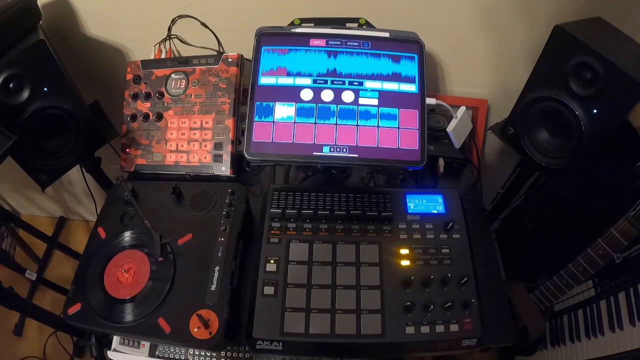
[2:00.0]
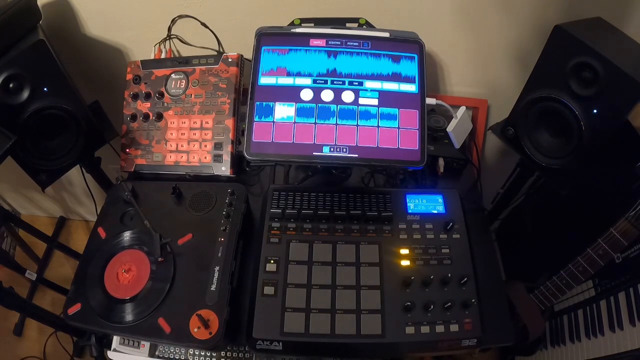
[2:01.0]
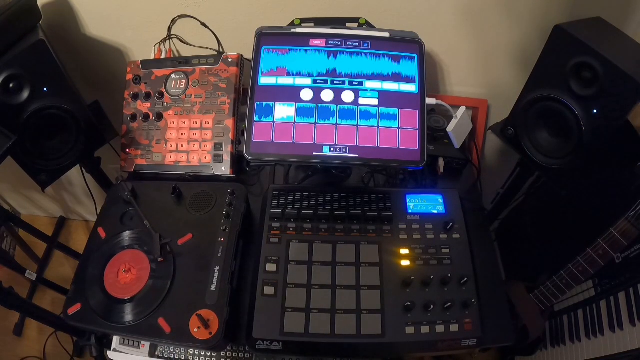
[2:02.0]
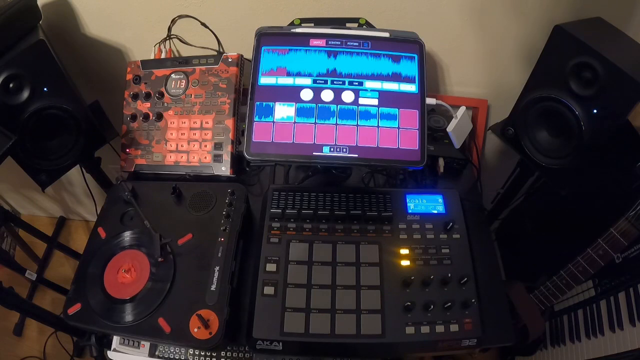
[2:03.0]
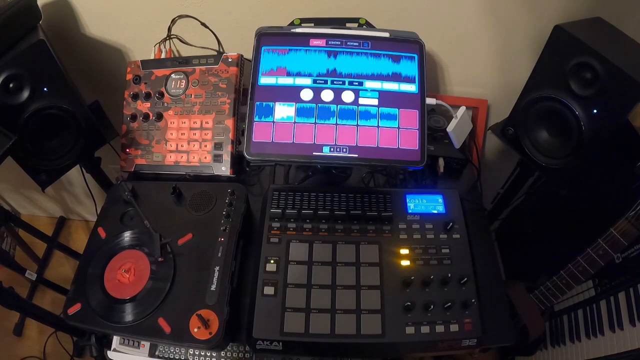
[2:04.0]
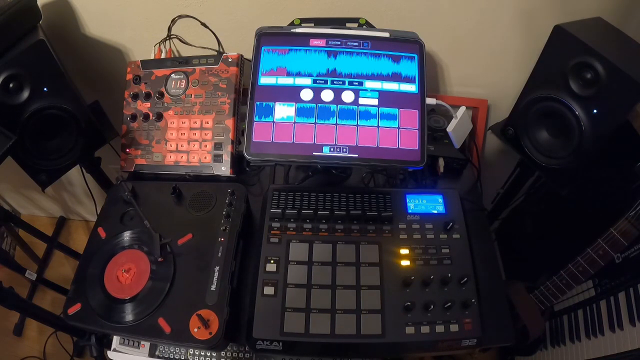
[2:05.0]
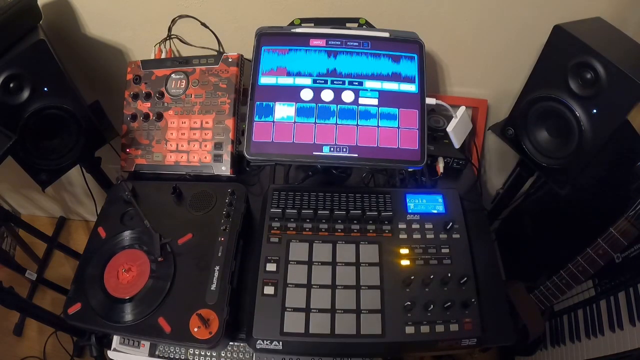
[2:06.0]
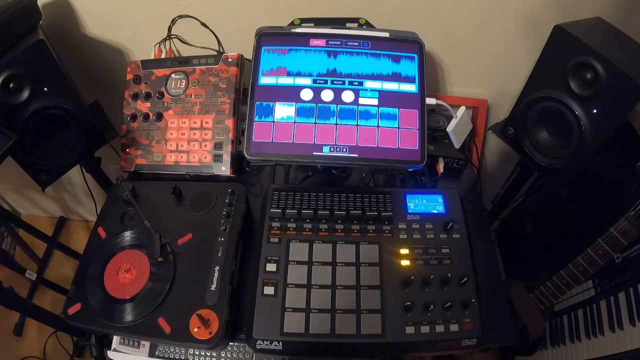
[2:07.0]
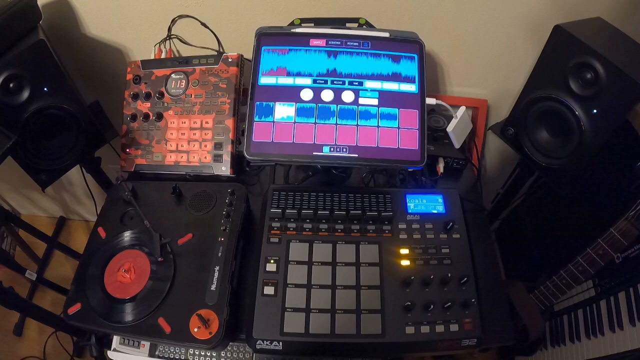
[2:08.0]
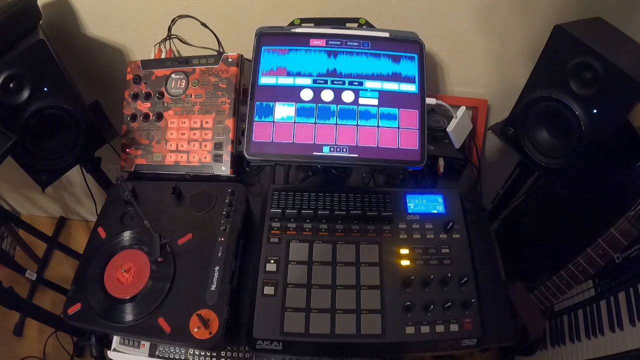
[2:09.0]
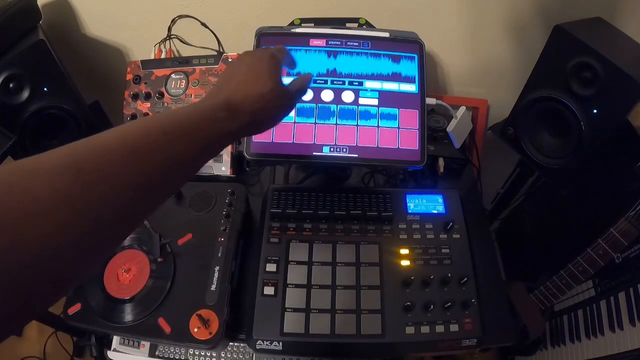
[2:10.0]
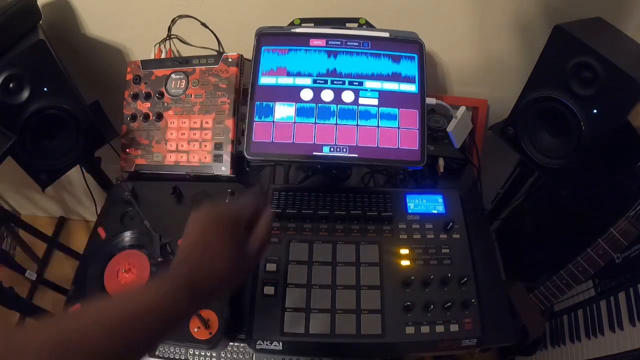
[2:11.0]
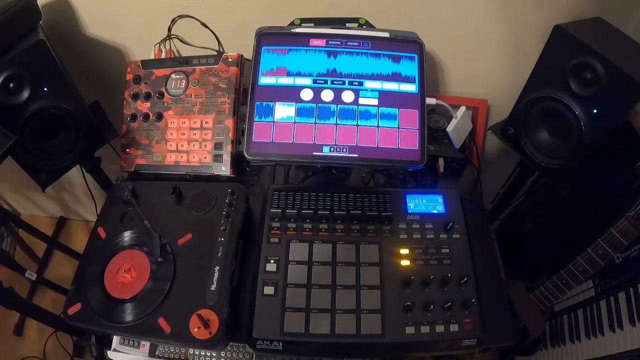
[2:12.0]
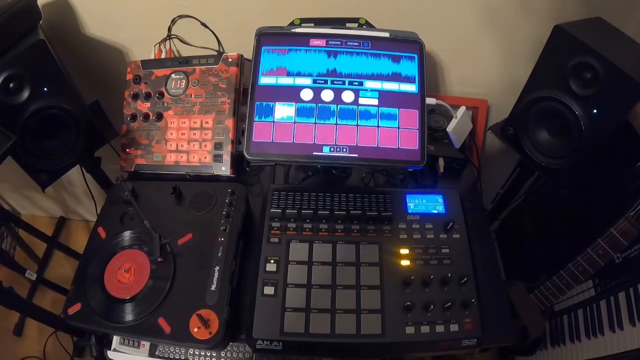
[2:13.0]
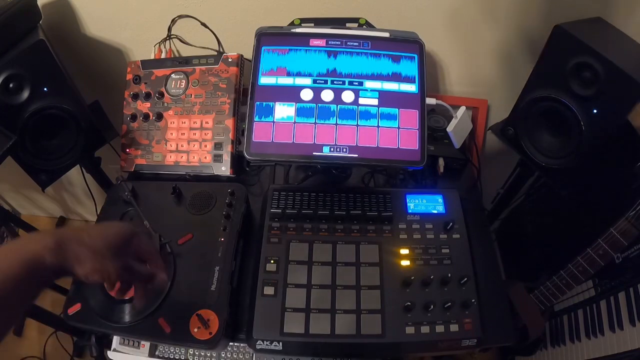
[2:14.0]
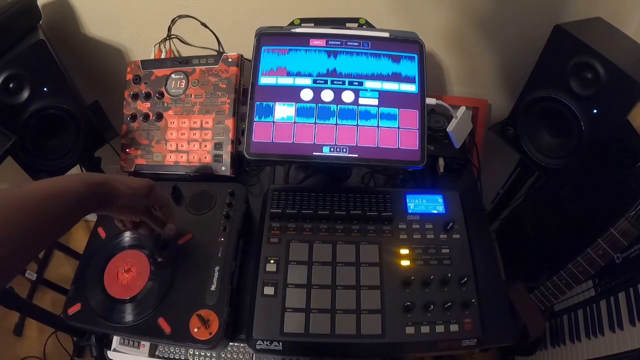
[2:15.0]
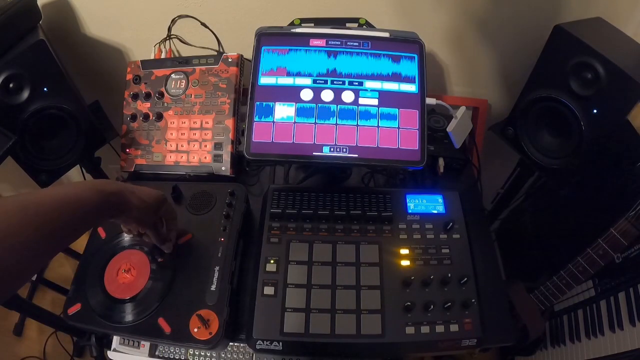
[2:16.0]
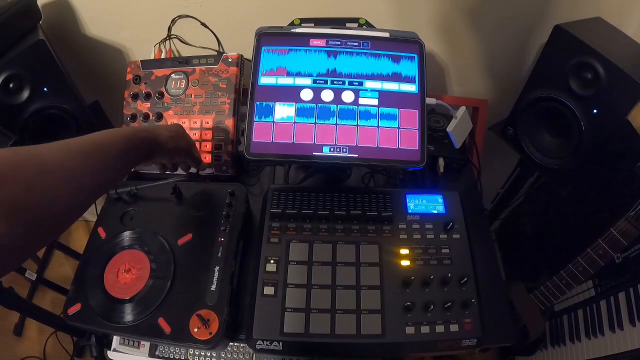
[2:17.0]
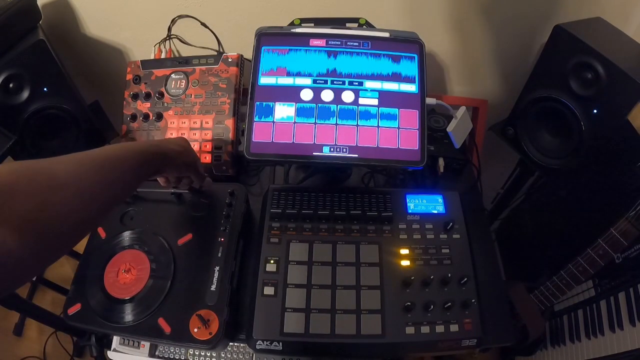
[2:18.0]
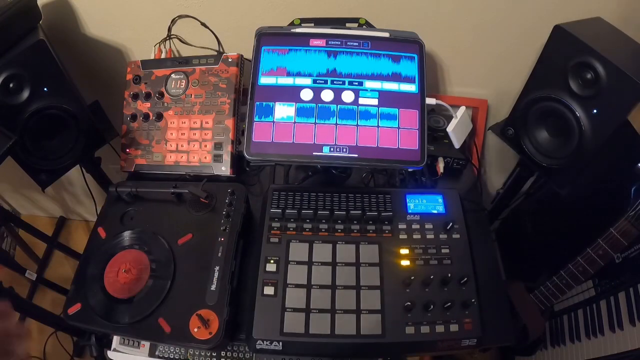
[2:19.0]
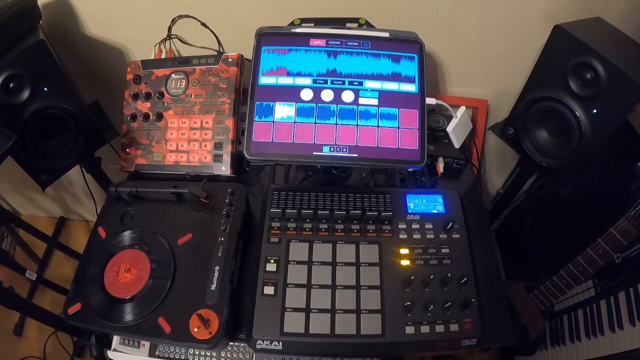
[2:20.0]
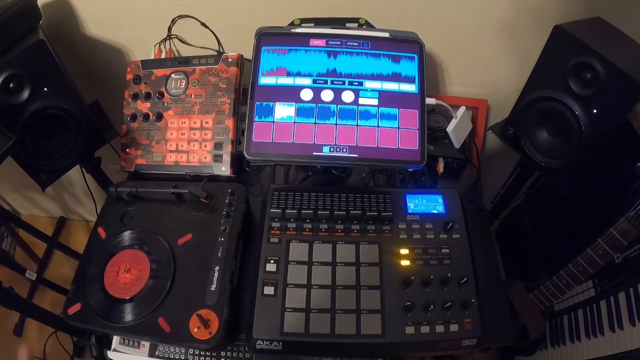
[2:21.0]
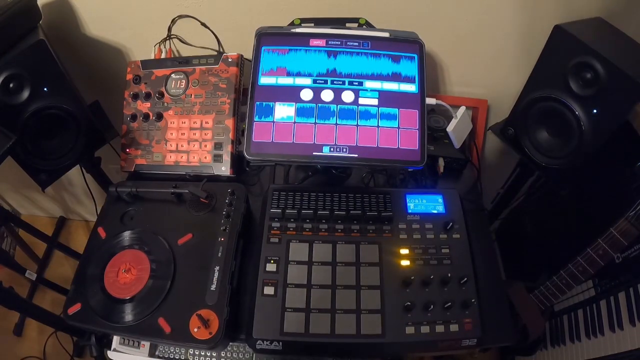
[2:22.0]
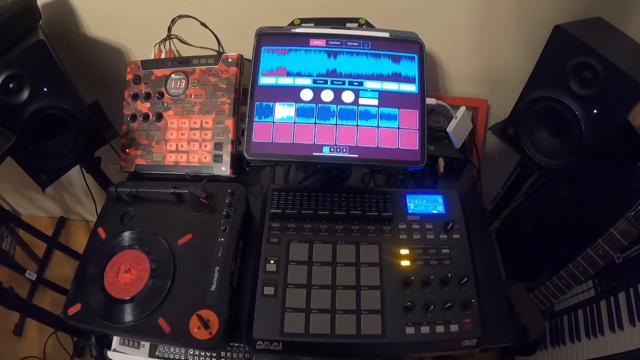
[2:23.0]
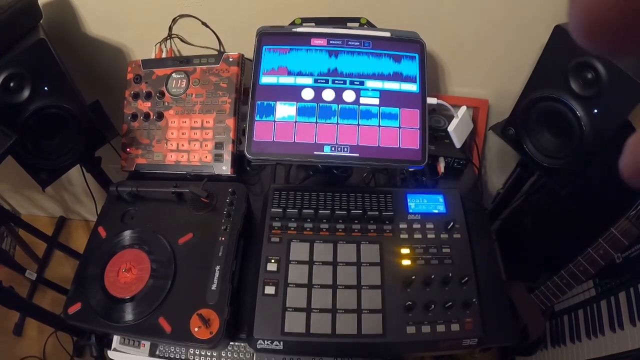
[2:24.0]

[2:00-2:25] In the lower left corner of the screen, the vinyl record spins slowly clockwise on the record player with the arm and its needle on the record. The user eventually picks up the arm from the record and puts it back on the armrest of the record player, and the vinyl record stops spinning.